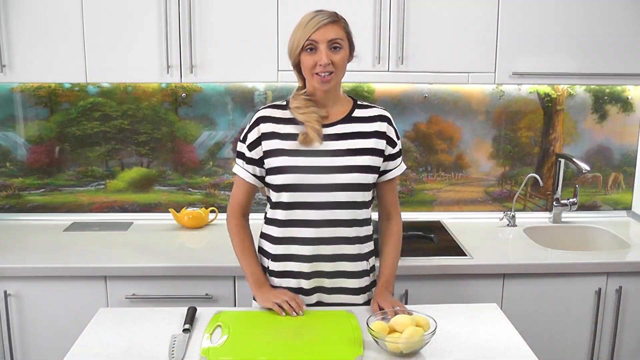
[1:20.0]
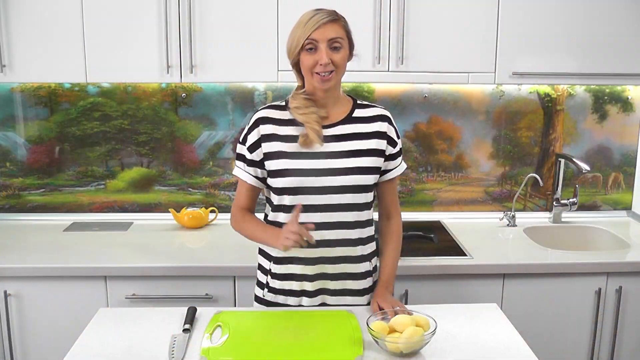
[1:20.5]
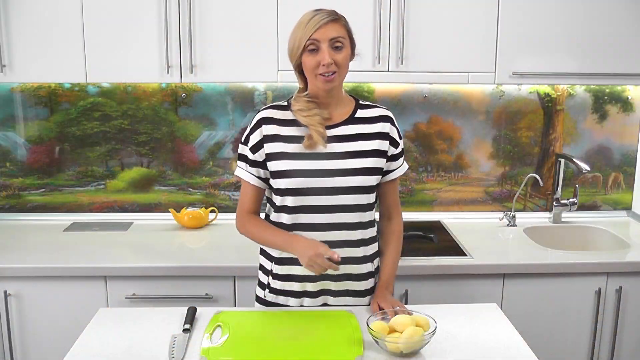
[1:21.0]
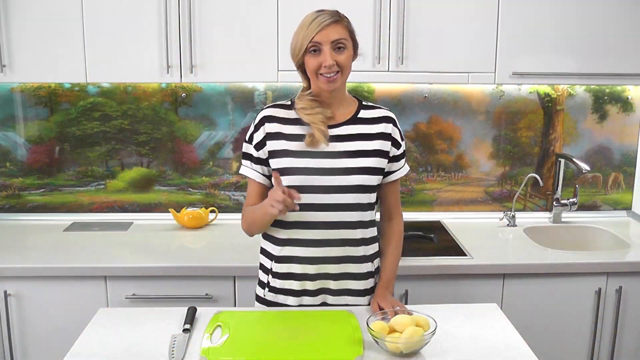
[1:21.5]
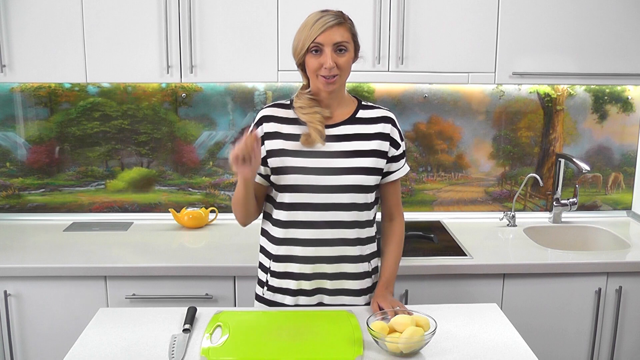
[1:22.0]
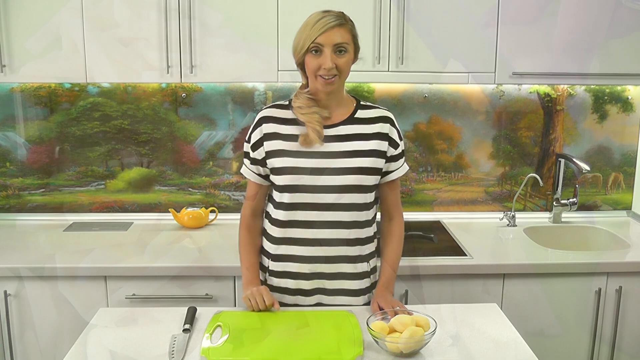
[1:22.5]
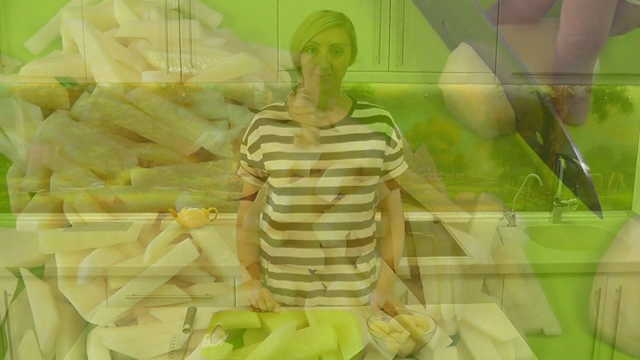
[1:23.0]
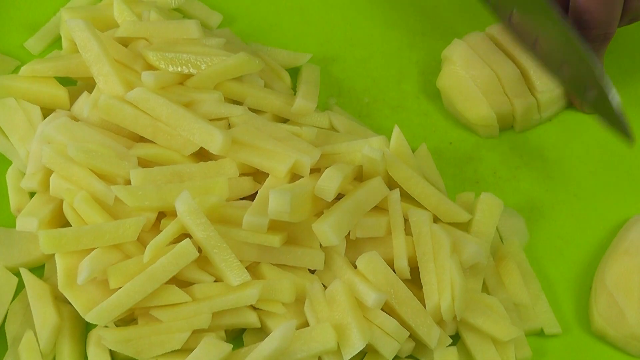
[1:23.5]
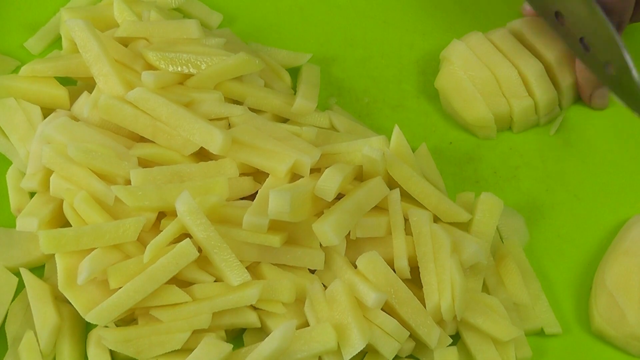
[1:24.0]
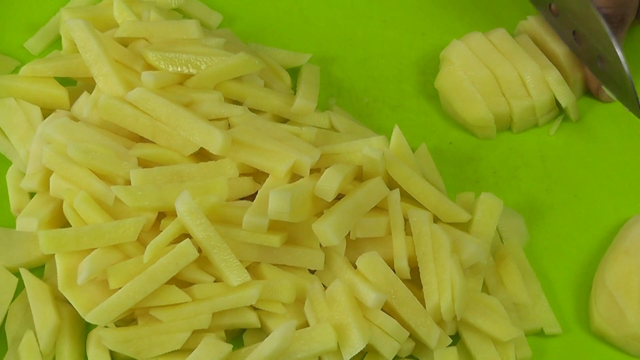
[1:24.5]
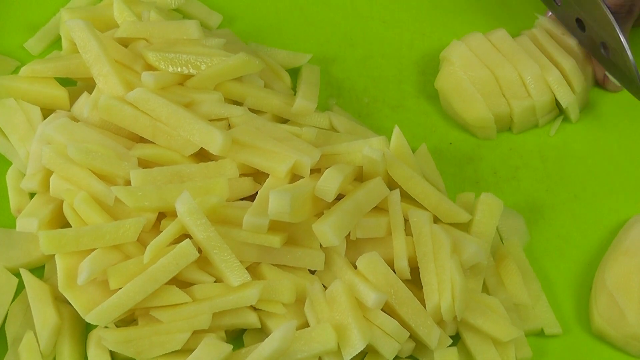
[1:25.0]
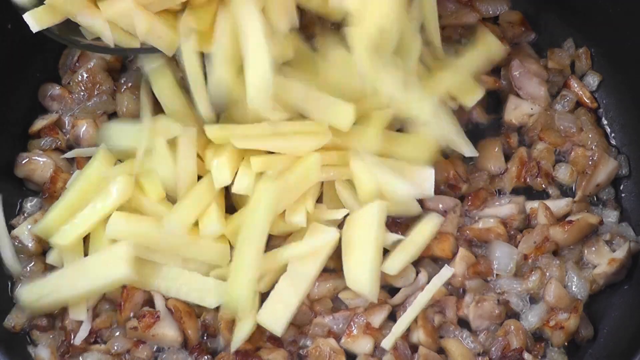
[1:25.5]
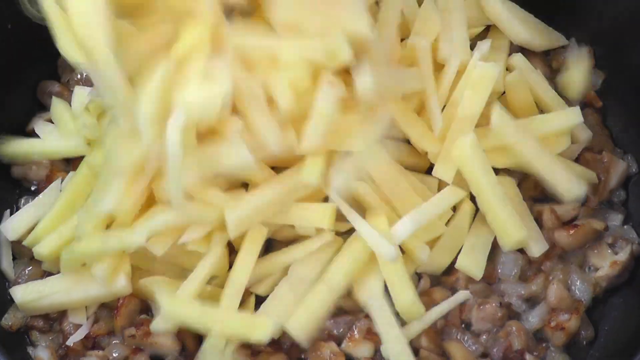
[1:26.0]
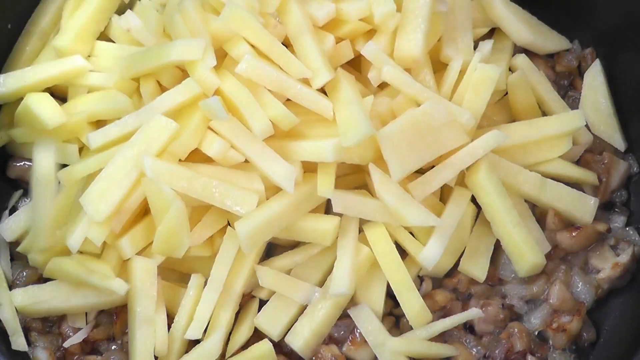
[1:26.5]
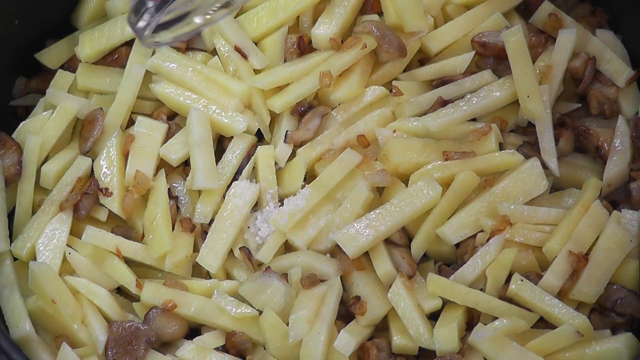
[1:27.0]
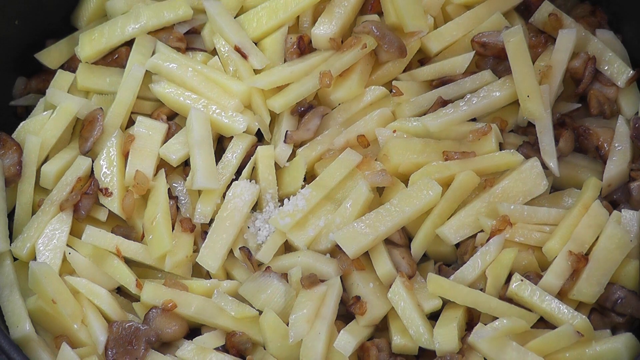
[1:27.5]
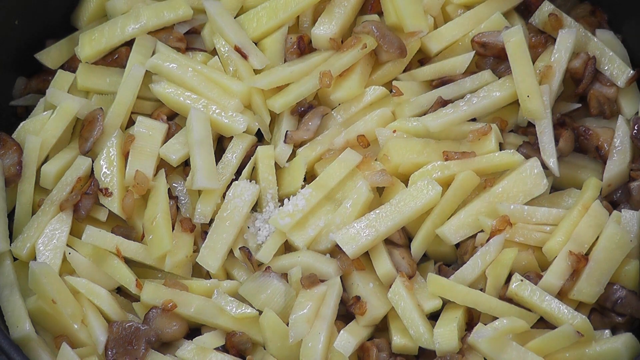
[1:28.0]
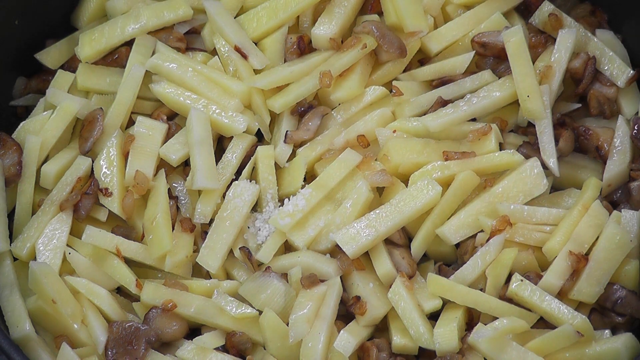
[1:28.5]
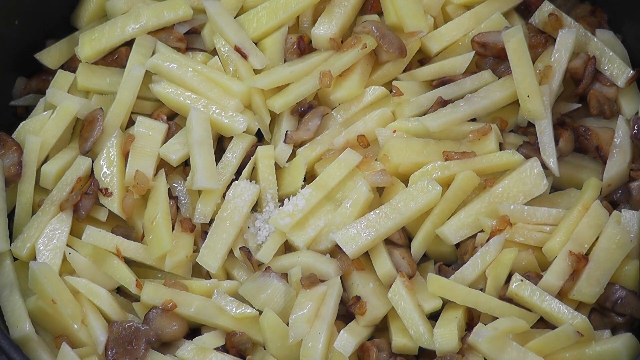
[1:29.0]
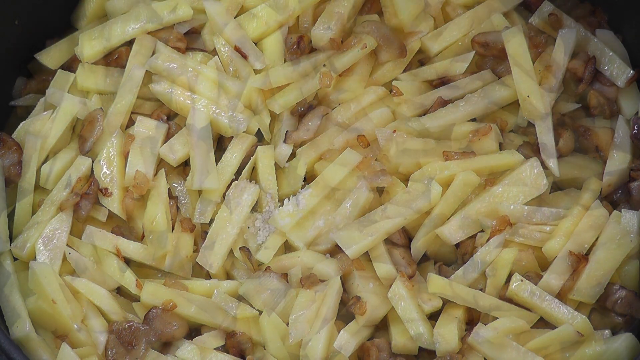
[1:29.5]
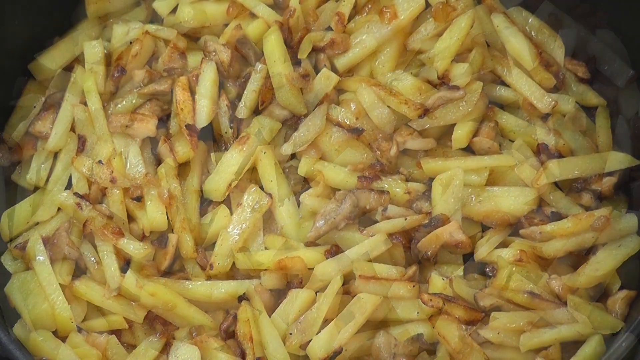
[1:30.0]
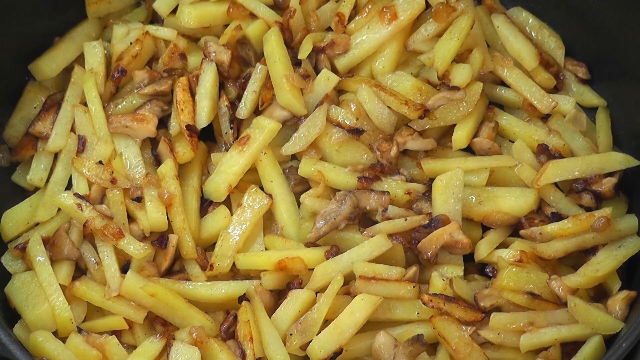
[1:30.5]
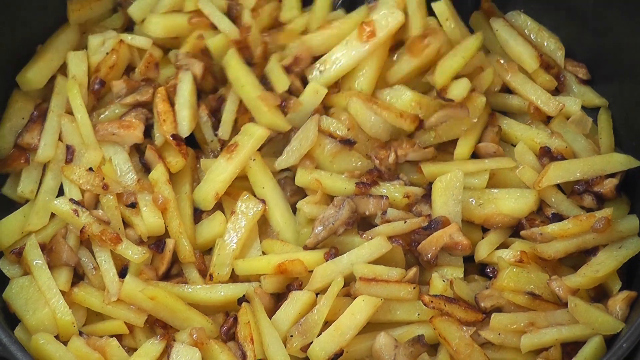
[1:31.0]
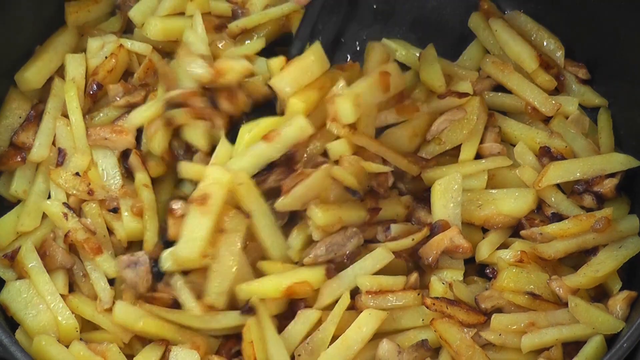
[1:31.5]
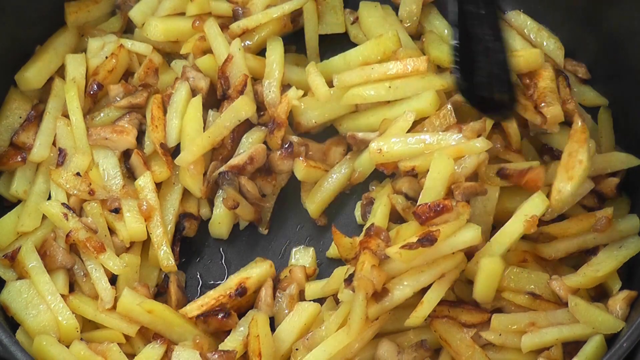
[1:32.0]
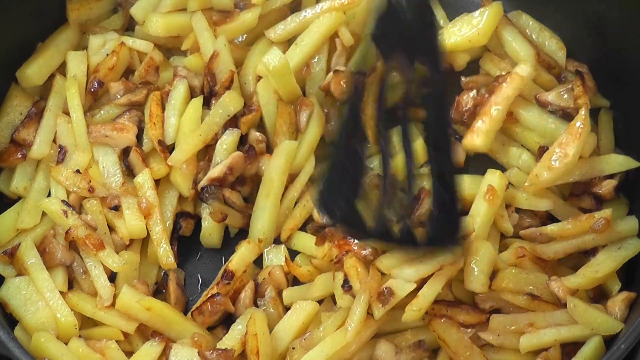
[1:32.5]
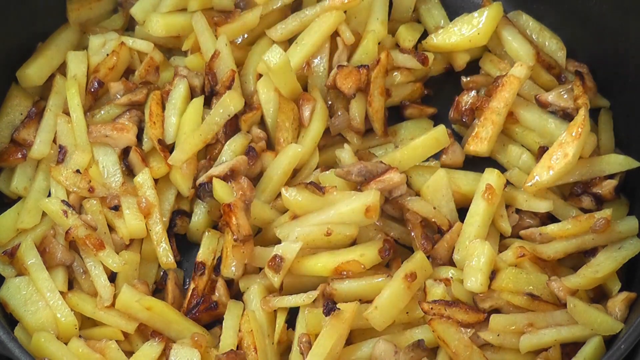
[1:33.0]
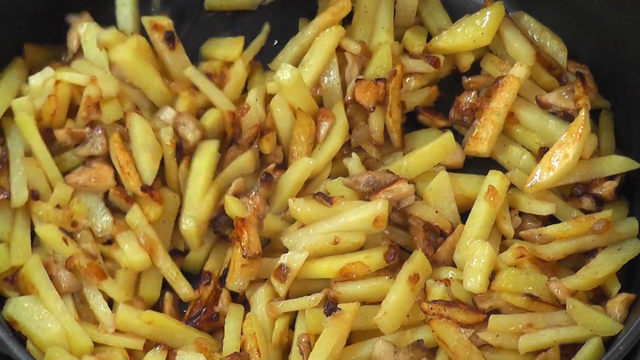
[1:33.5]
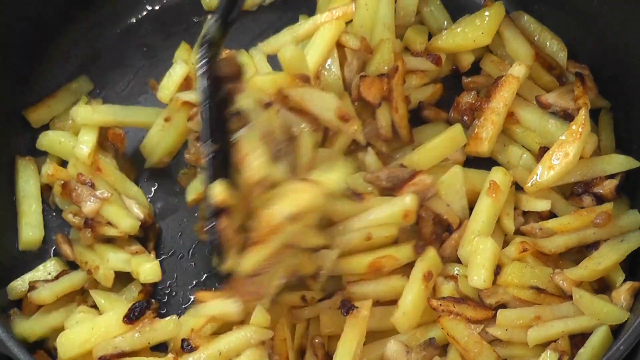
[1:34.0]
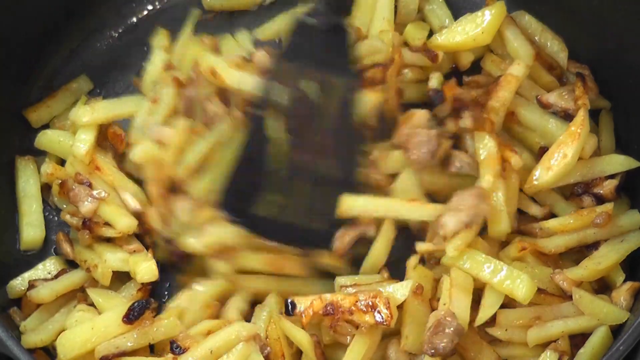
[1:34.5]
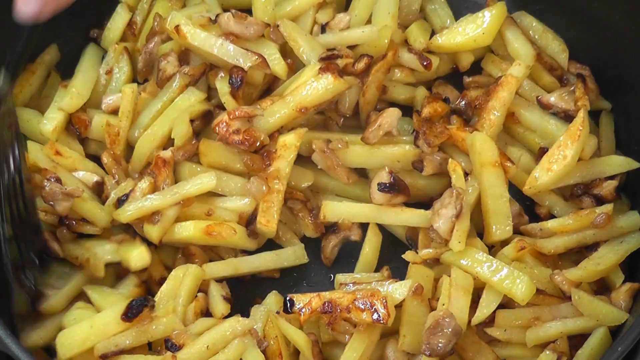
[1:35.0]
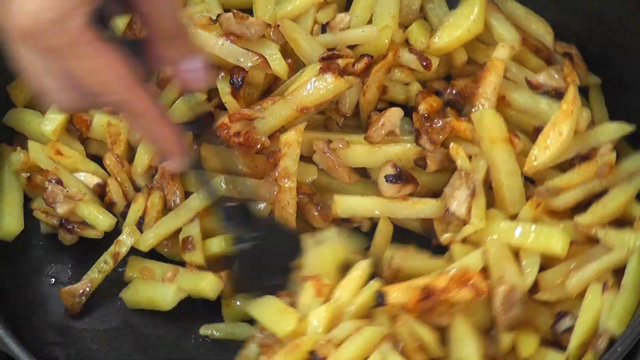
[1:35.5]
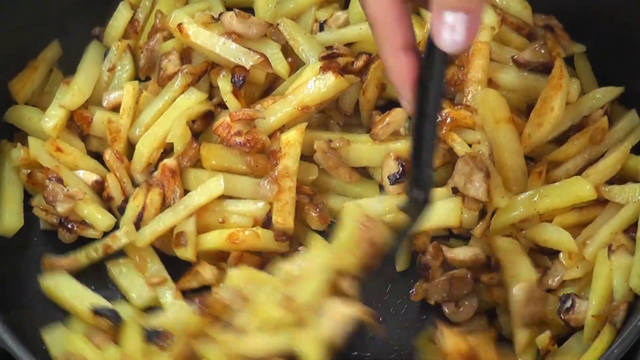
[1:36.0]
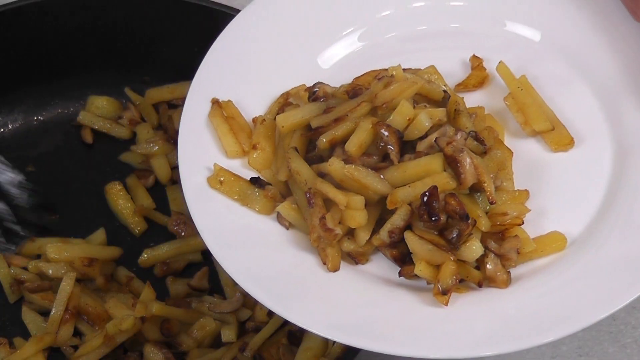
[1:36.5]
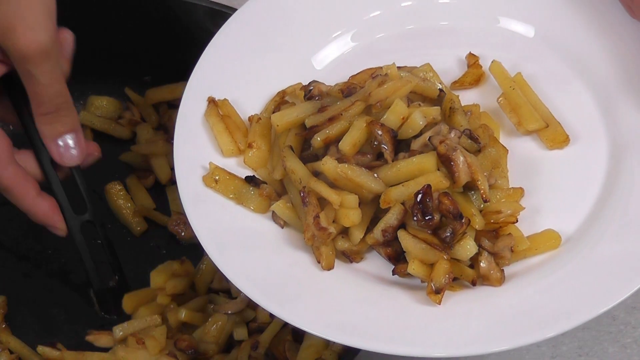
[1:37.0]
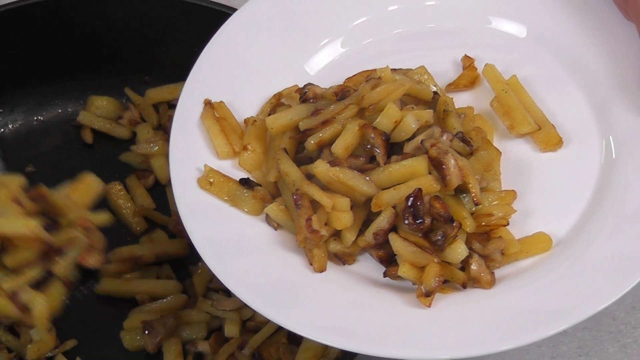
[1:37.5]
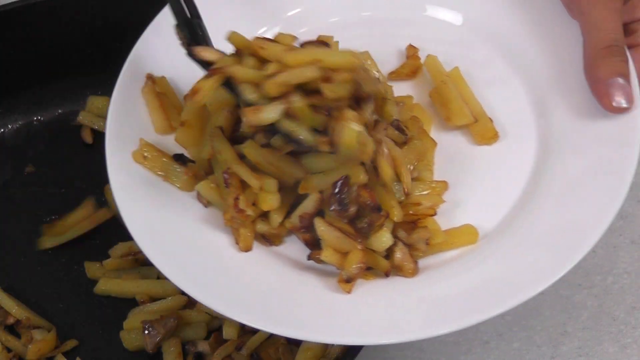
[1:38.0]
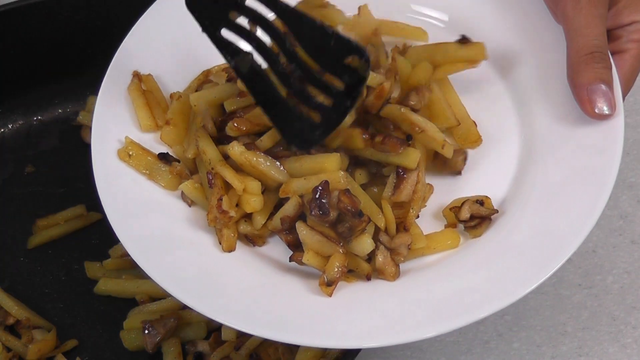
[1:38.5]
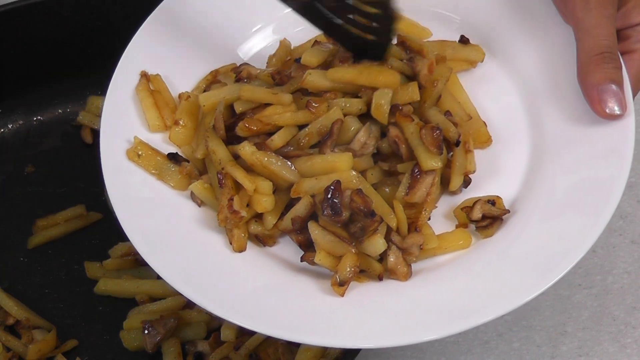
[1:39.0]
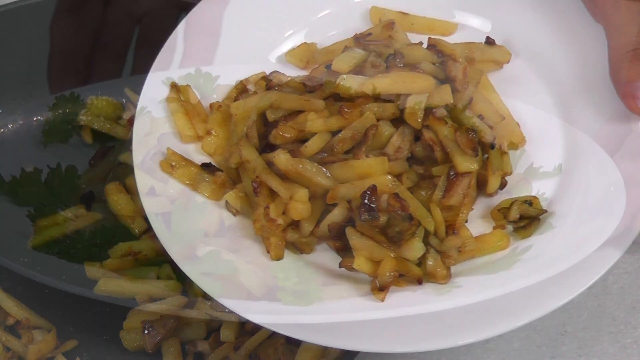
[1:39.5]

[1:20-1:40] Her fingers rest on a yellow cutting board with a knife and potatoes. A yellow pot of some kind is in the background, along with what may be a flat top stove or cooktop, a sink with a yellow handle, and cupboards. She cuts the potatoes into long strips, adds them to the other ingredients, and adds something white. She stirs everything; the pieces look like french fries of some kind and are fried in a pan with lots of oil. She then moves them onto a plate to serve; grease or oil is visible on them, they are visibly hot, and mushrooms and onions are mixed in with the potatoes.